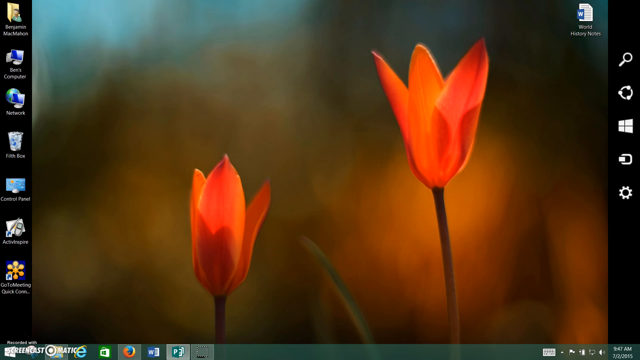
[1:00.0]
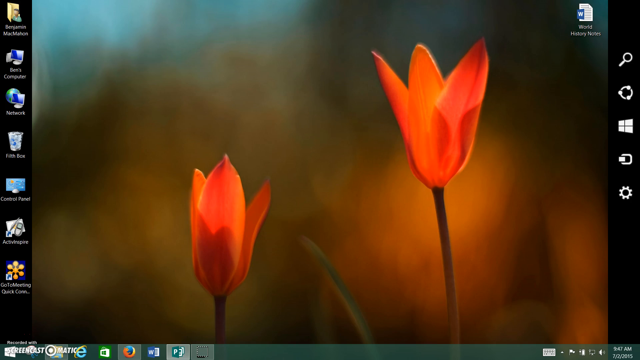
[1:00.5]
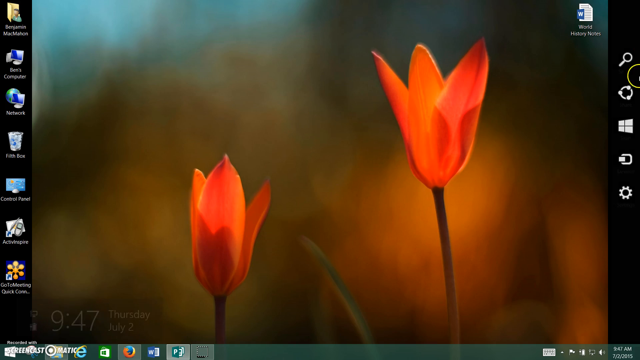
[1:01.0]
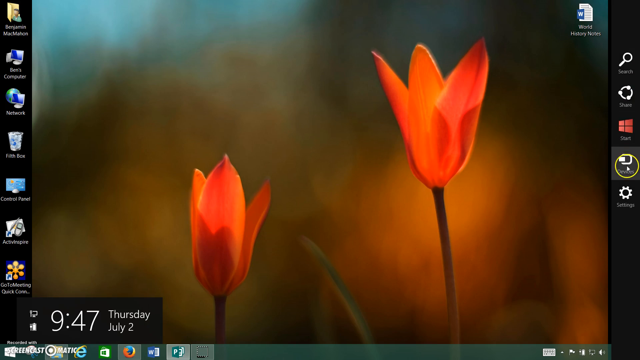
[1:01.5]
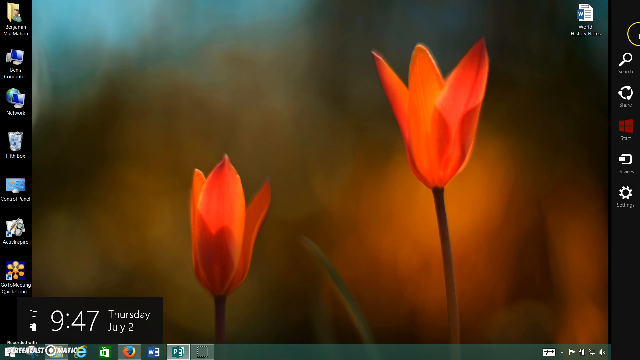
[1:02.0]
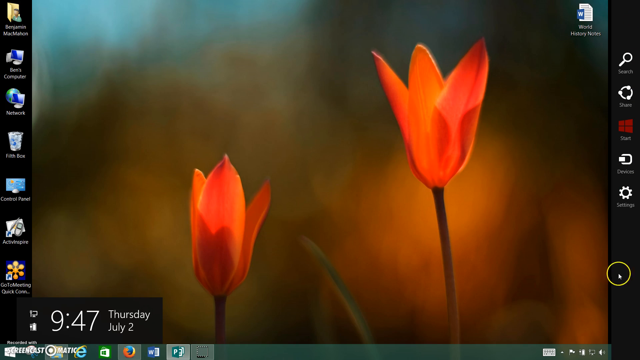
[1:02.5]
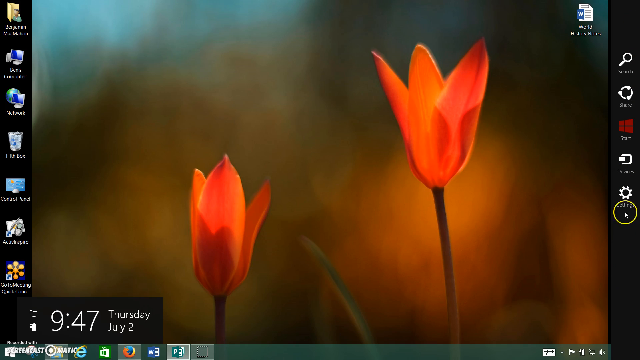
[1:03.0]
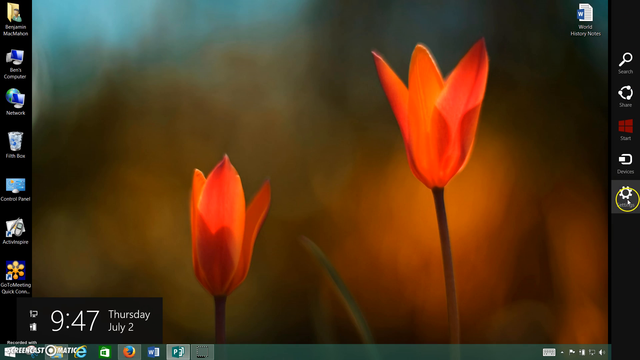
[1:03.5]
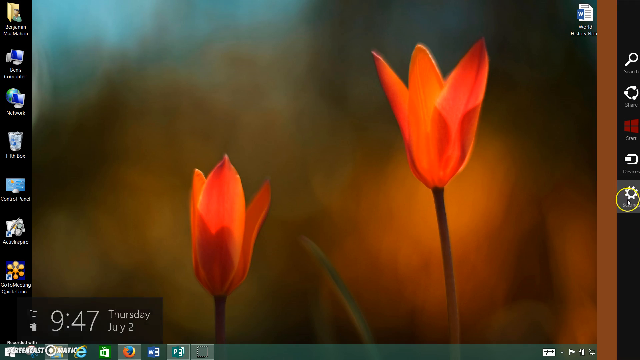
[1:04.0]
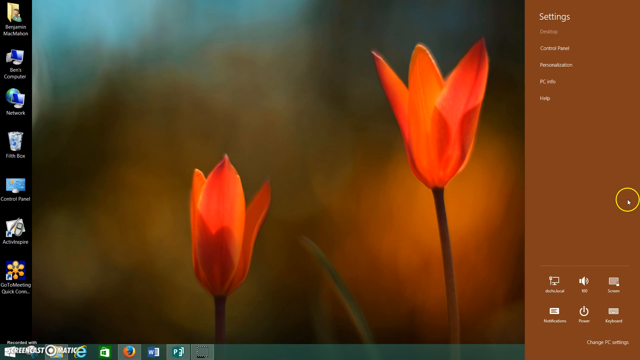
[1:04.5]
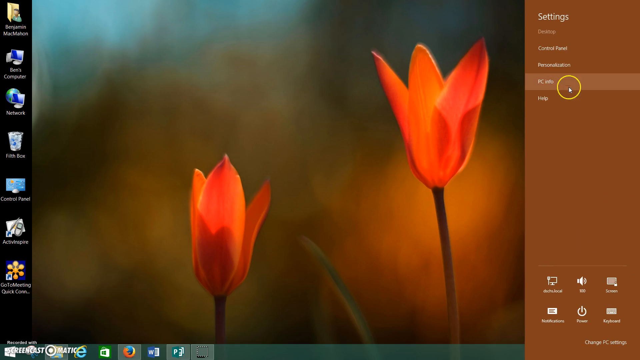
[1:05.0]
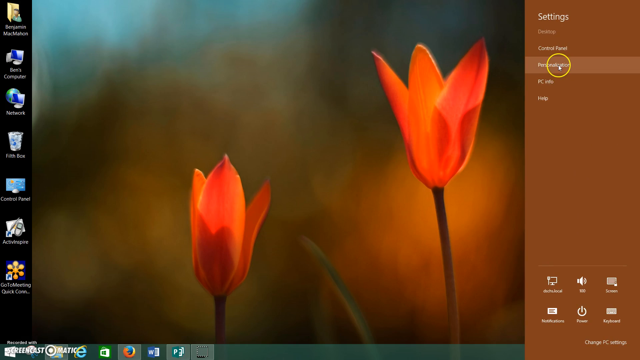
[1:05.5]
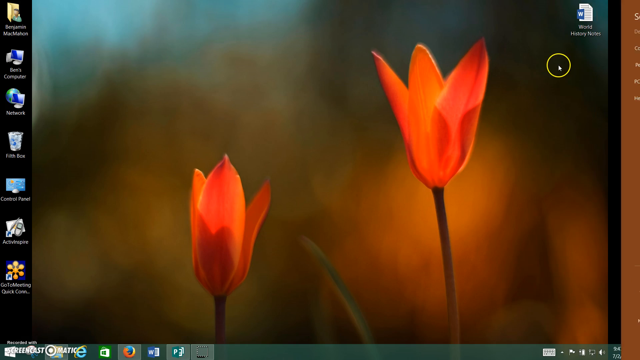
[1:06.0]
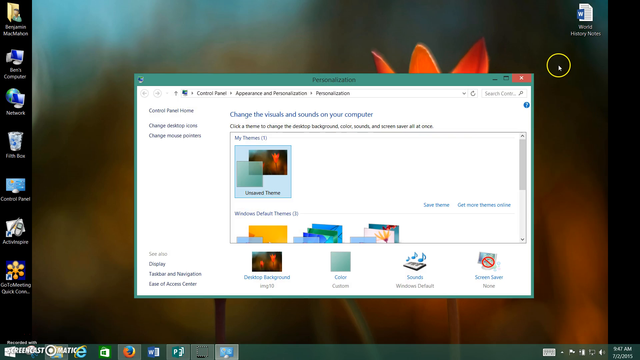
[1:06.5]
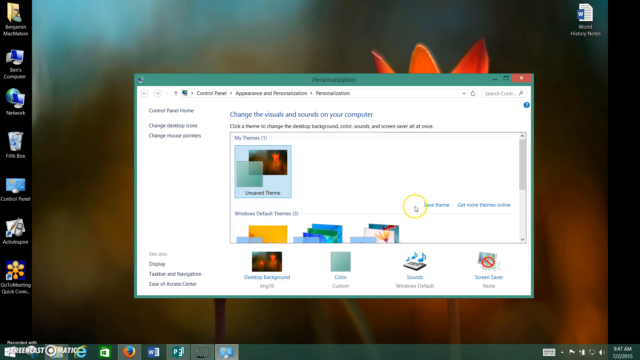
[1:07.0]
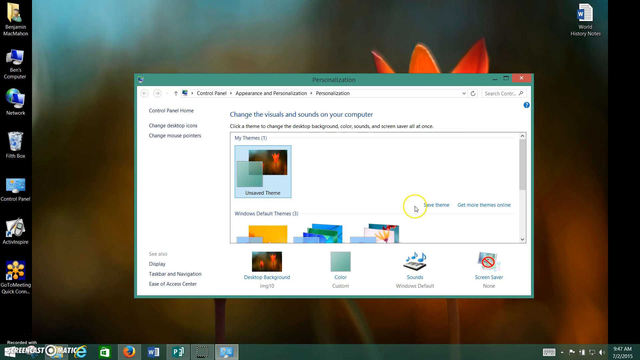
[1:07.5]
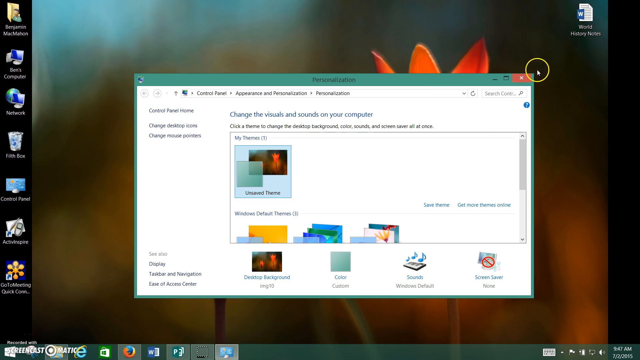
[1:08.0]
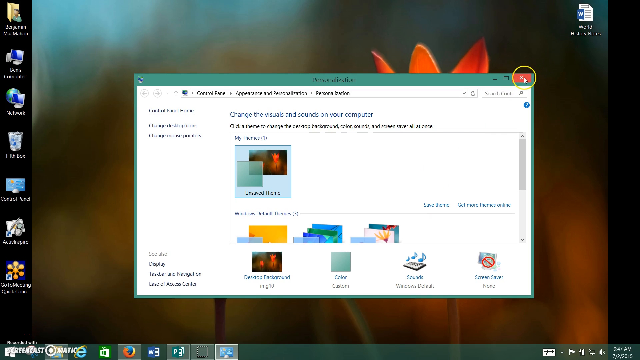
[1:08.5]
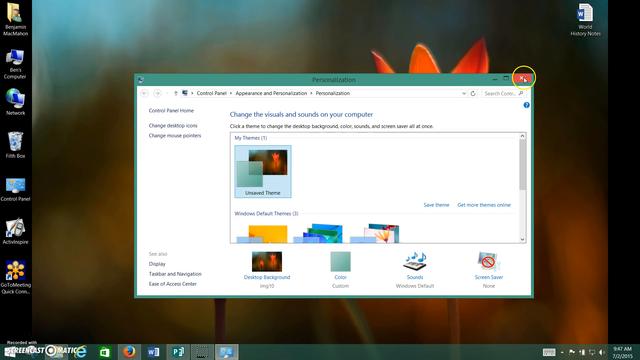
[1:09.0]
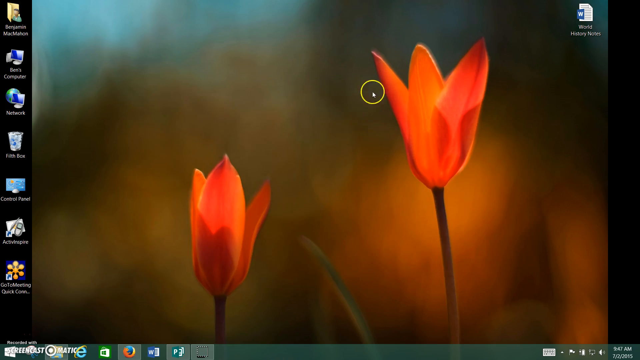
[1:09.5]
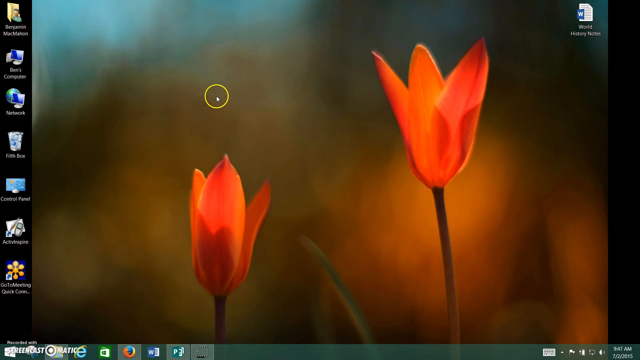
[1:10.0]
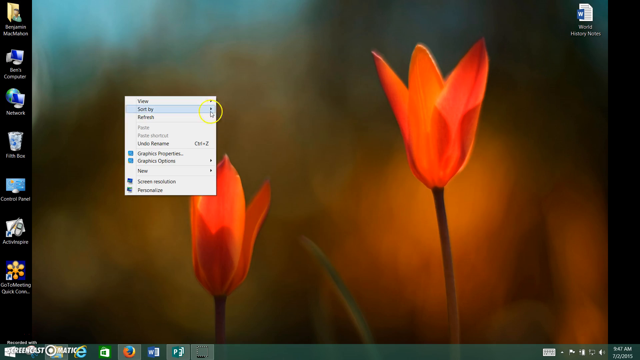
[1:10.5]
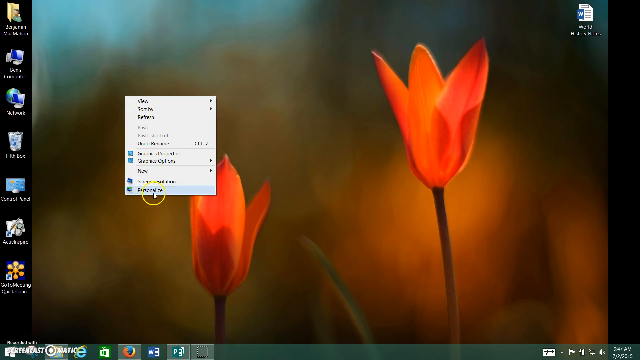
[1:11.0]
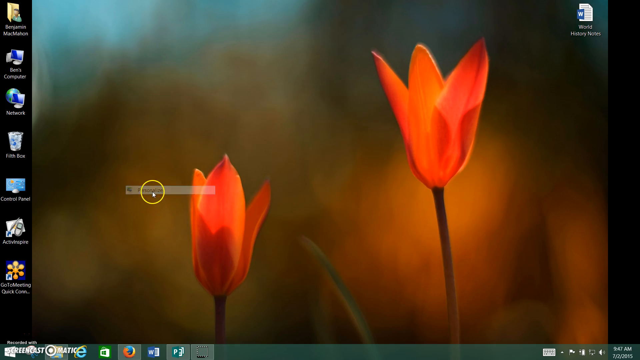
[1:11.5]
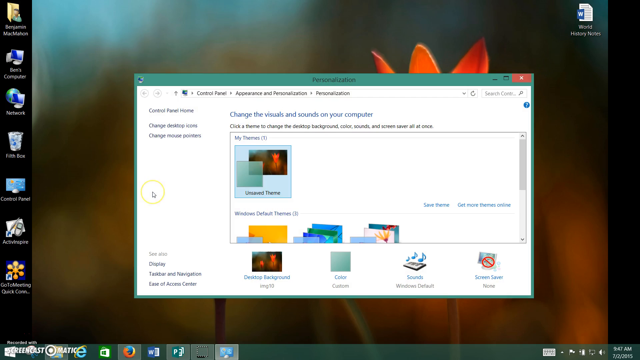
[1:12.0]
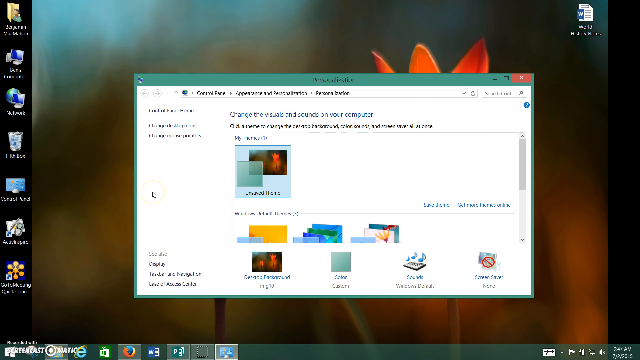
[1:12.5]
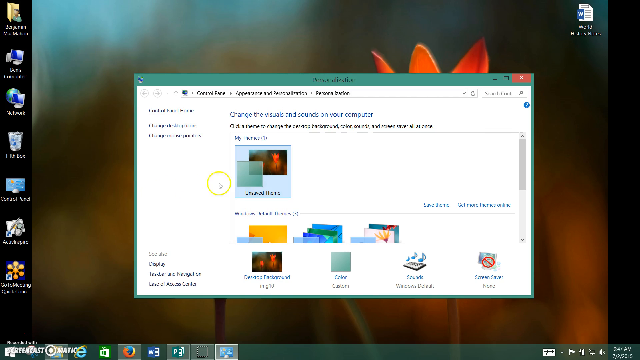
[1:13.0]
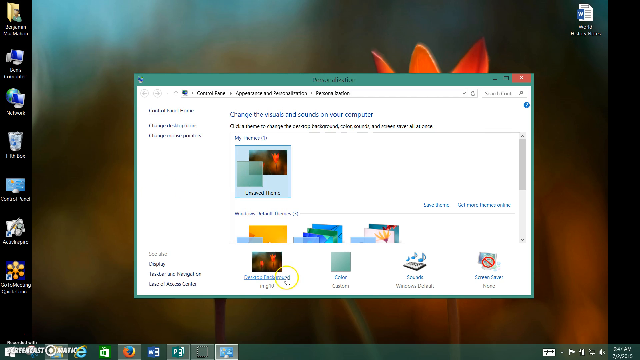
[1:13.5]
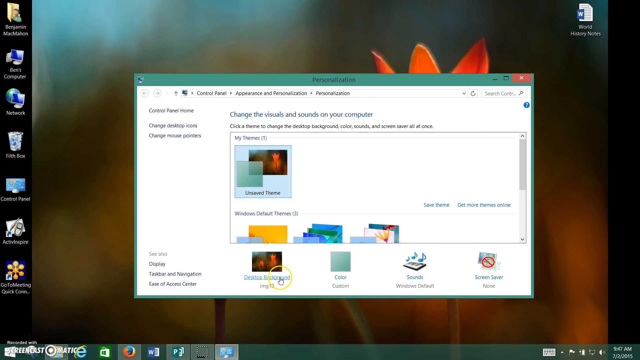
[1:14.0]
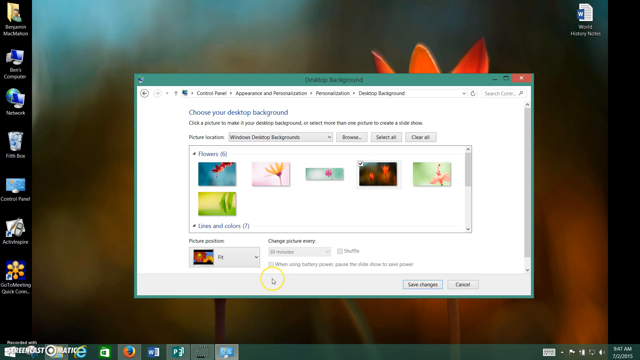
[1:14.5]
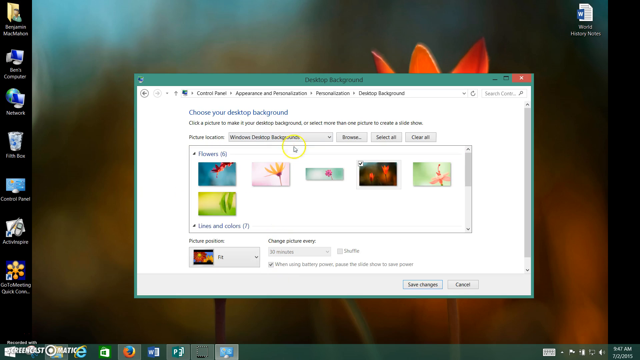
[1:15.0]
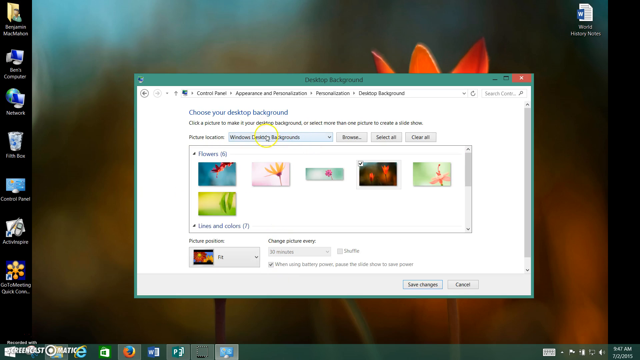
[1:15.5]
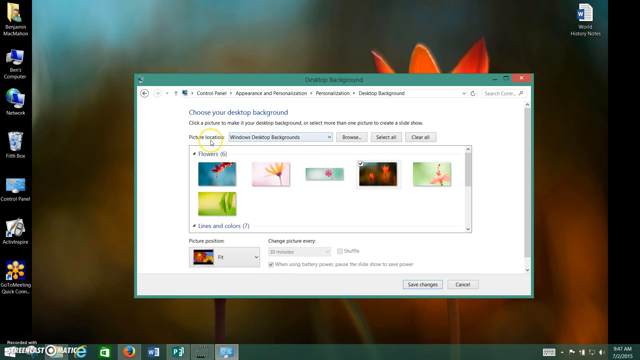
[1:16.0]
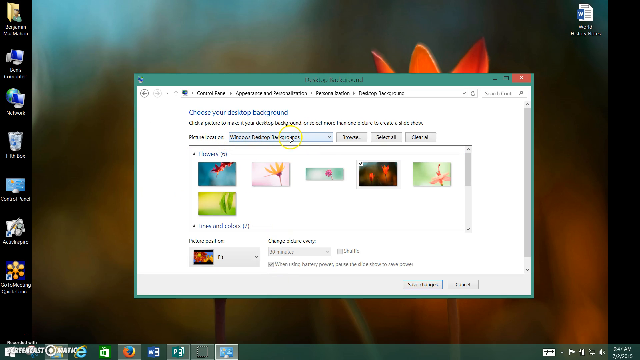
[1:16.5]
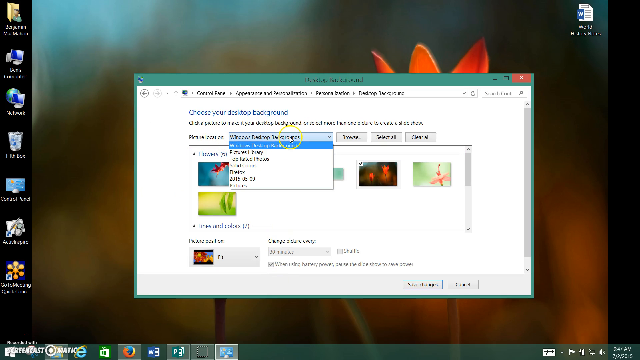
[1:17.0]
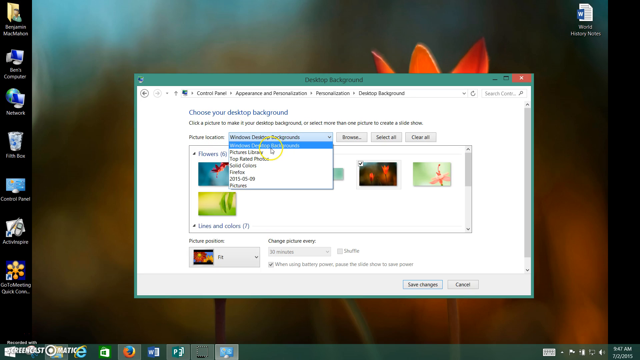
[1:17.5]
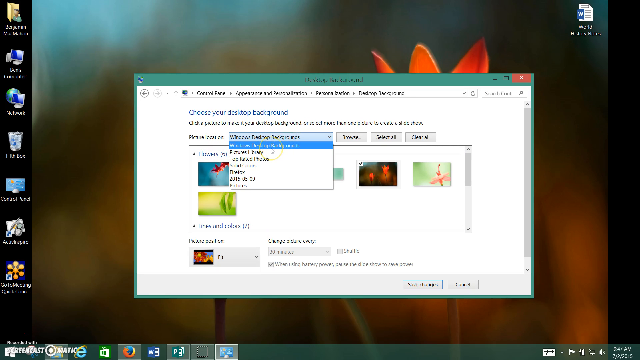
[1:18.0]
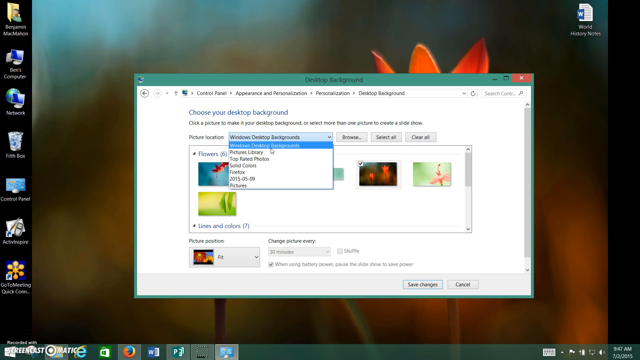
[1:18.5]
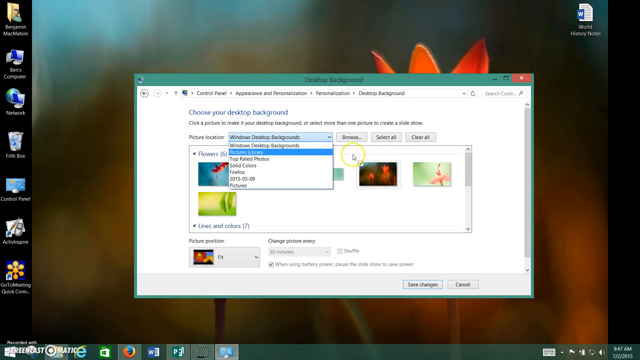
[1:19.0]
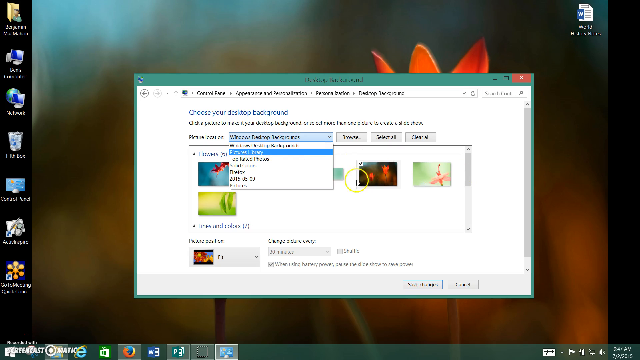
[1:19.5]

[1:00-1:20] The Windows desktop background shows two red tulips on a dark, smoky black background. On the left side are icons for My Computer, Network, the Recycle Bin and the Control Panel, and in the top right of the screen is a single Word document for World History Notes. The mouse cursor goes to the side of the screen and opens a taskbar with the options Search, Share, the Start Menu, Devices and Settings. The user moves to Settings, which opens a Settings menu with the options Desktop, Control Panel, Personalization, PC Info and Help. Moving the cursor over Personalization opens a personalization menu for changing themes, desktop backgrounds, color, sounds or screensaver. The user closes it by clicking the X in its top right corner, then right-clicks the desktop to bring up the menu with View, Sort By, Refresh, Paste, Paste Shortcut, Undo Rename, Graphics Properties, Graphics Options, New, Screen Resolution and Personalize. Clicking Personalize once again opens the same personalization menu. The user clicks Desktop Background, which shows a number of desktop backgrounds, and clicks the drop-down menu for Picture Location, which is set to Windows Desktop Backgrounds.